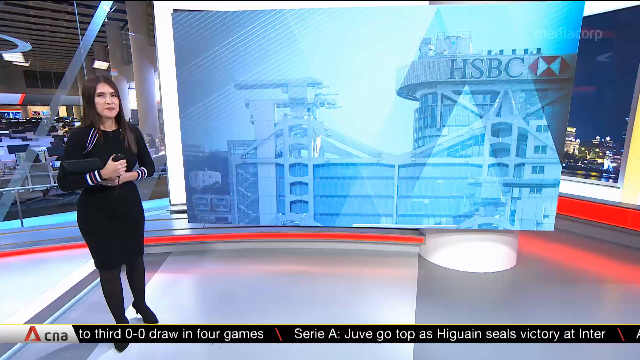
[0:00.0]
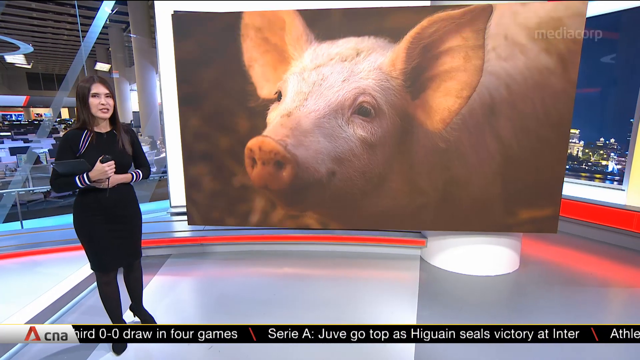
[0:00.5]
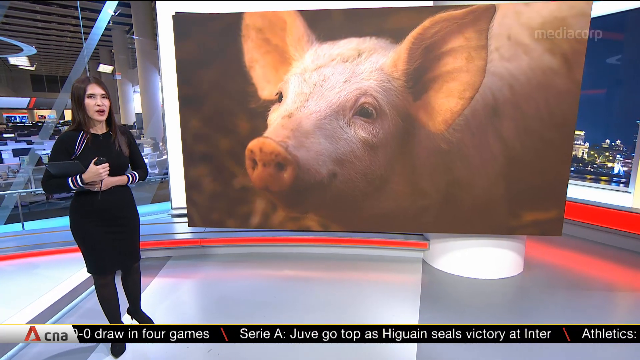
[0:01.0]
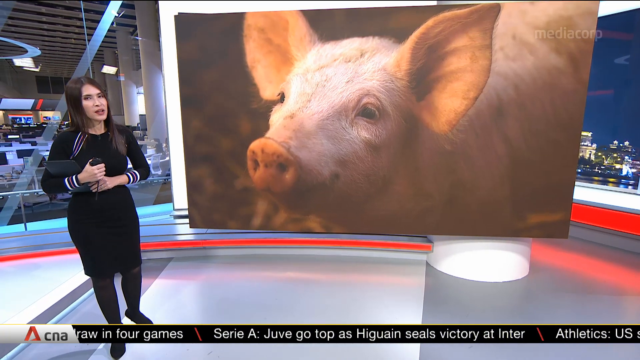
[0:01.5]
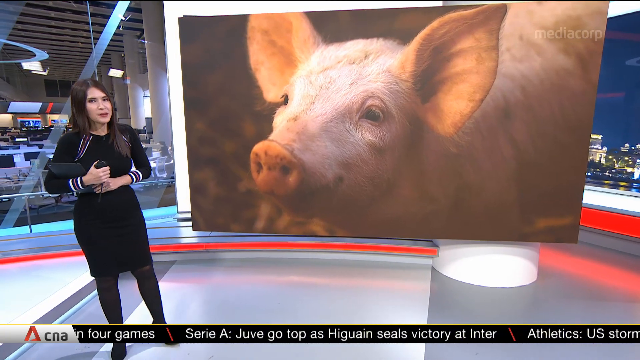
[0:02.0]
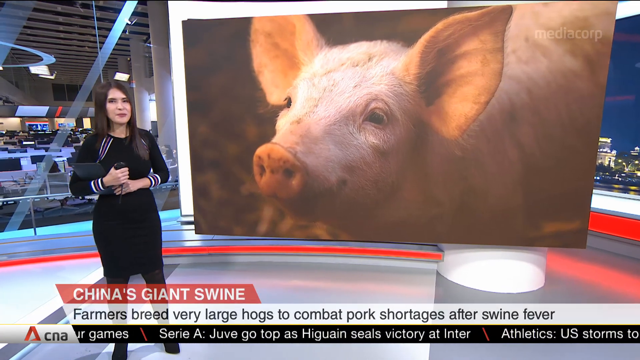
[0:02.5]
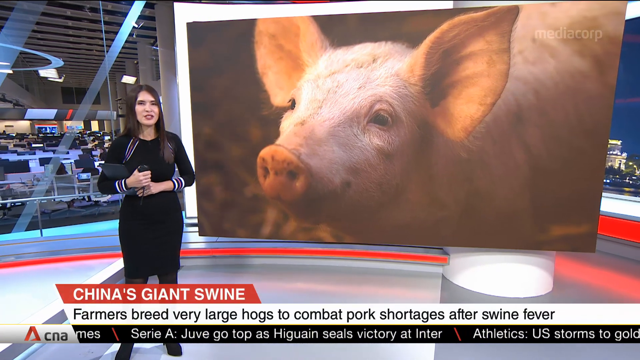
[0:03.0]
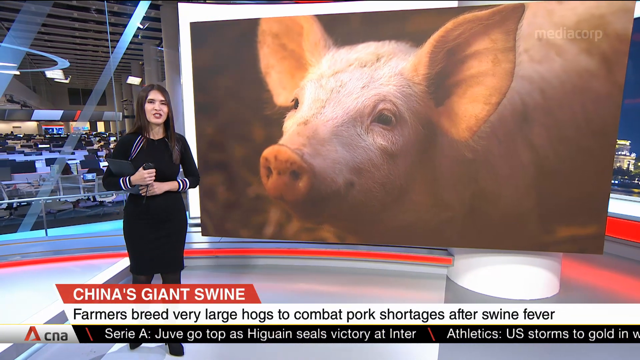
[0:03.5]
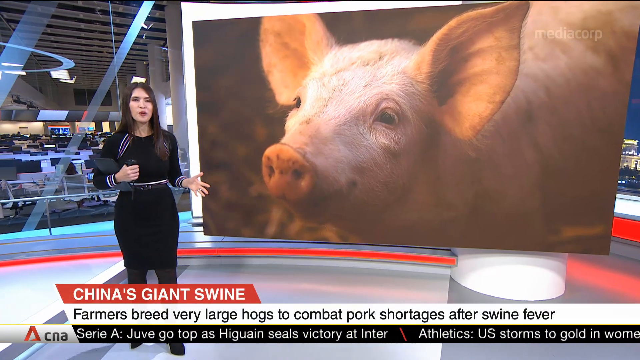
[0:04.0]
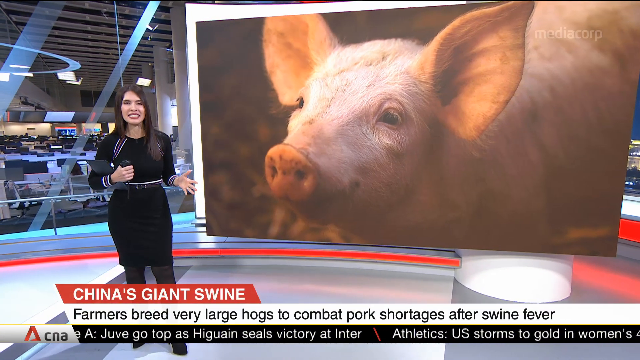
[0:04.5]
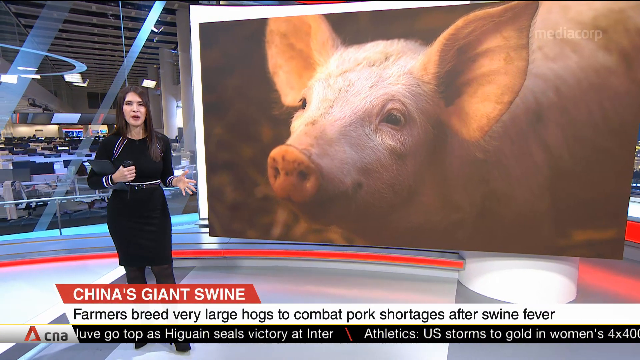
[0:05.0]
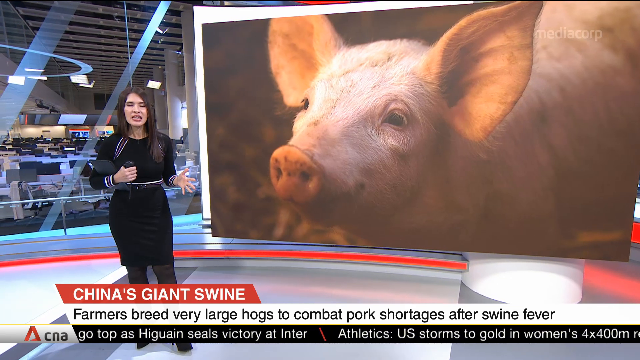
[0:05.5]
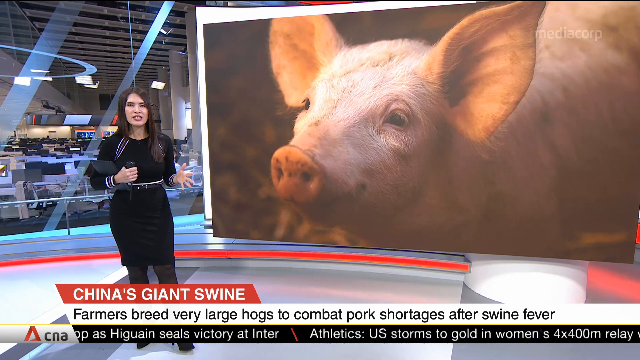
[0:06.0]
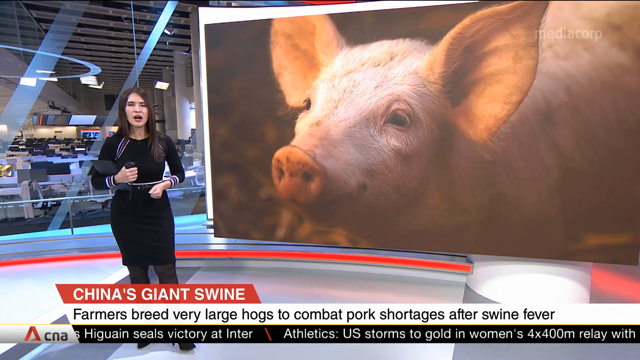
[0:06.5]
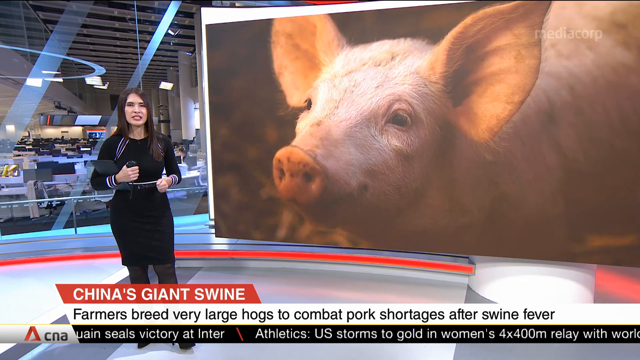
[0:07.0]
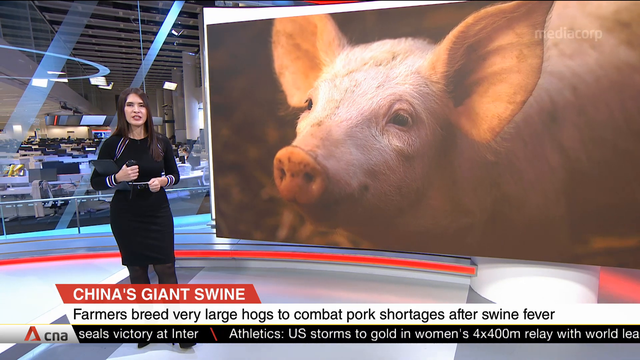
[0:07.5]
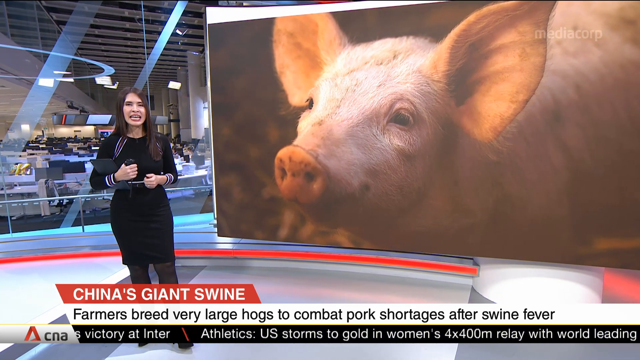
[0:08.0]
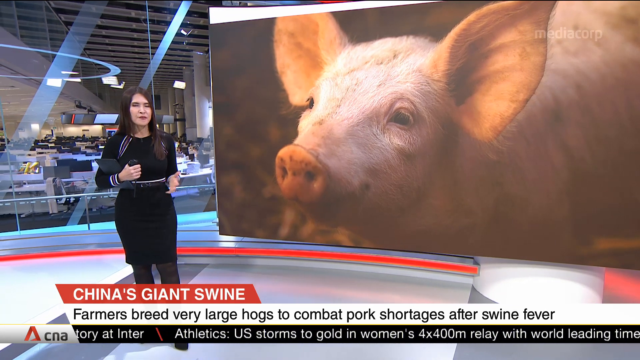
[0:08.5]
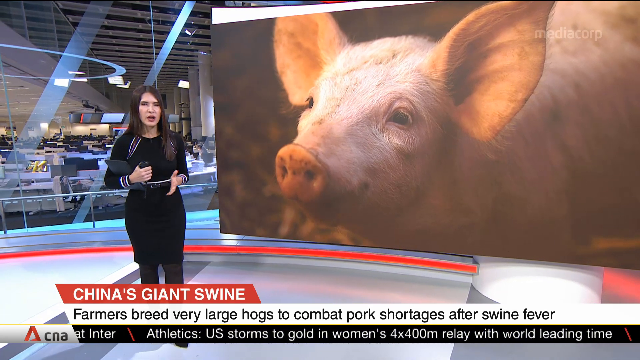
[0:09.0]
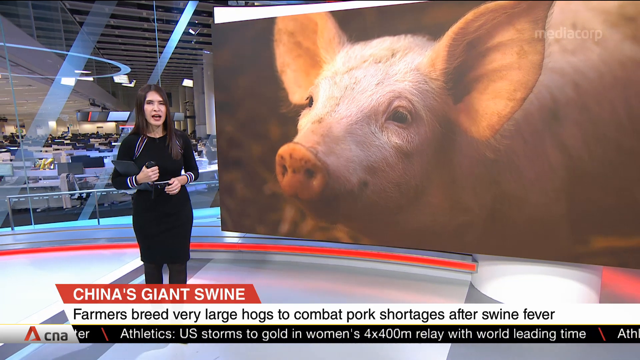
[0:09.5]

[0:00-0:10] A young woman appears with something that looks like a phone or a laptop. A picture of a pig is shown with the text "China giant swing". The pig continues to be shown. Only the woman and the pig are visible, with no other information on screen.